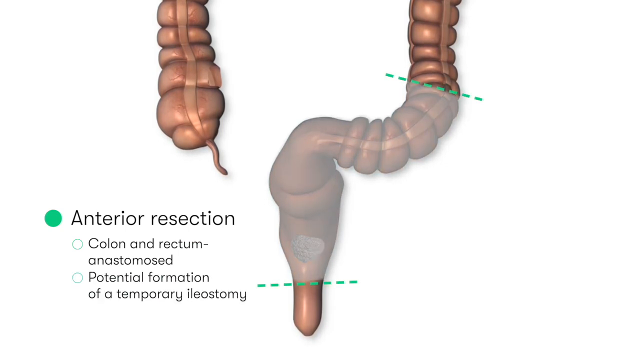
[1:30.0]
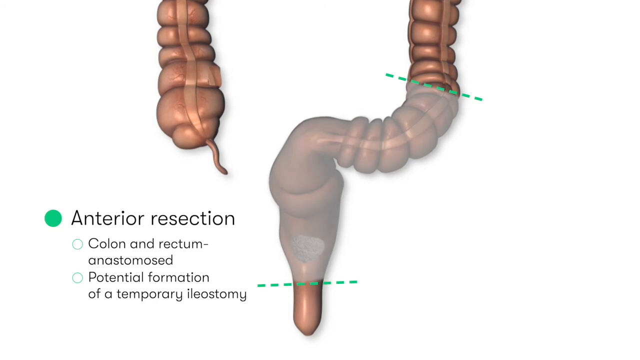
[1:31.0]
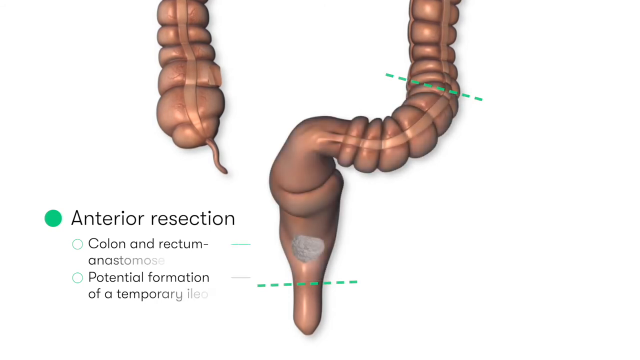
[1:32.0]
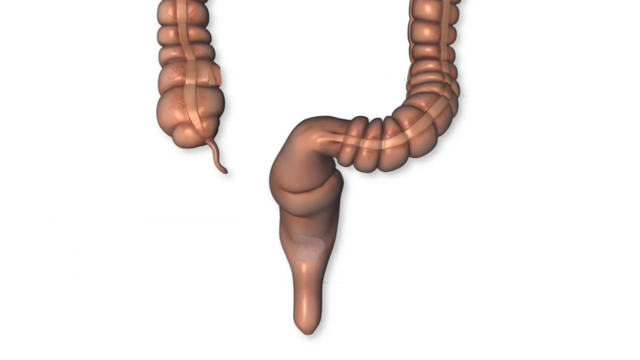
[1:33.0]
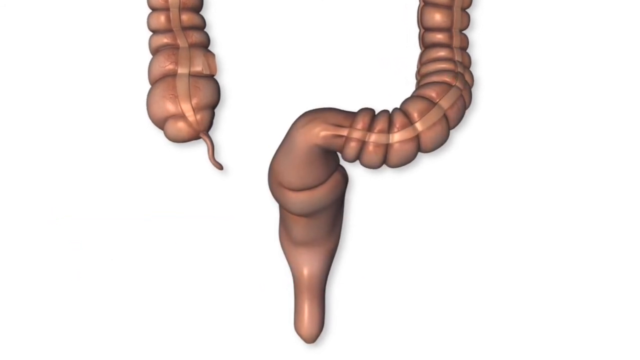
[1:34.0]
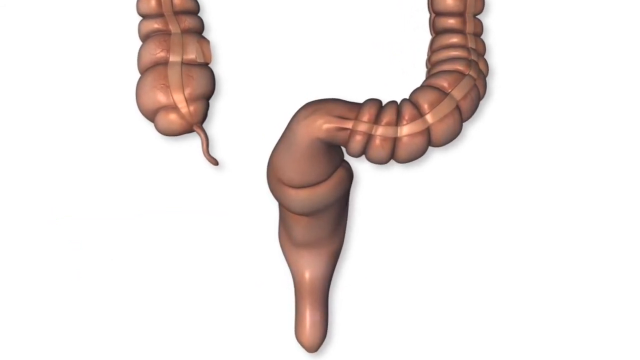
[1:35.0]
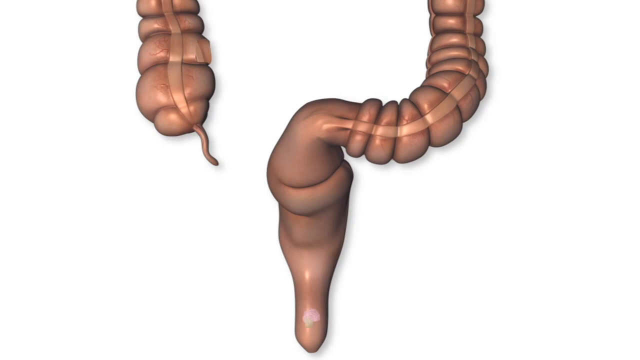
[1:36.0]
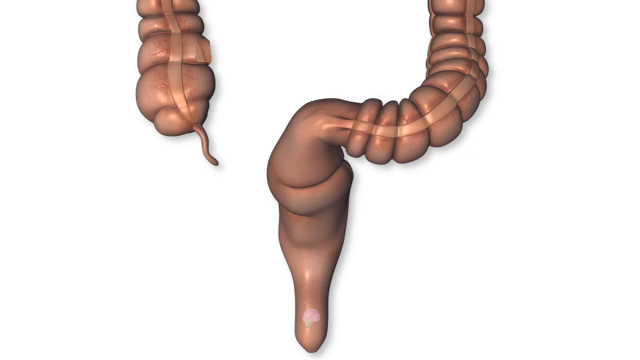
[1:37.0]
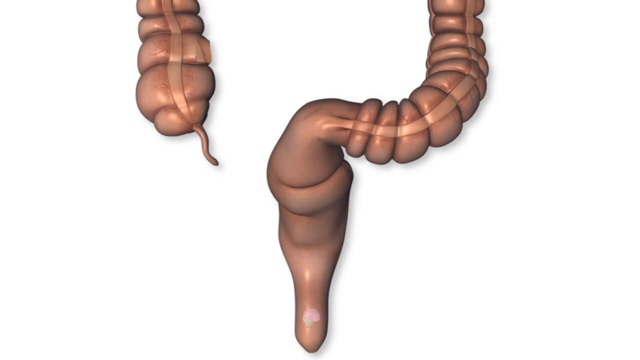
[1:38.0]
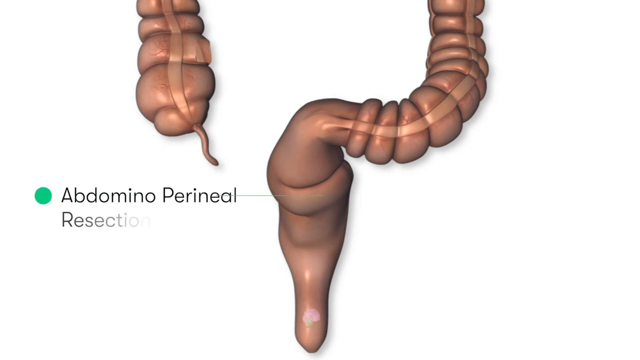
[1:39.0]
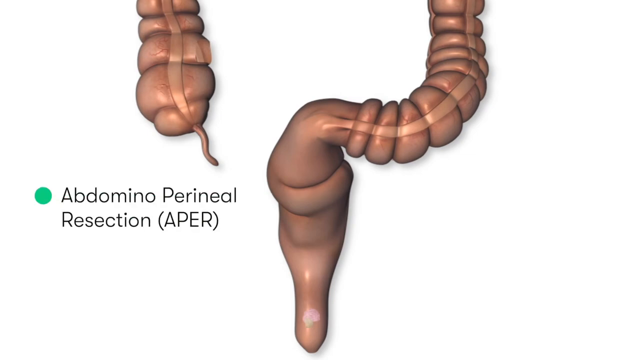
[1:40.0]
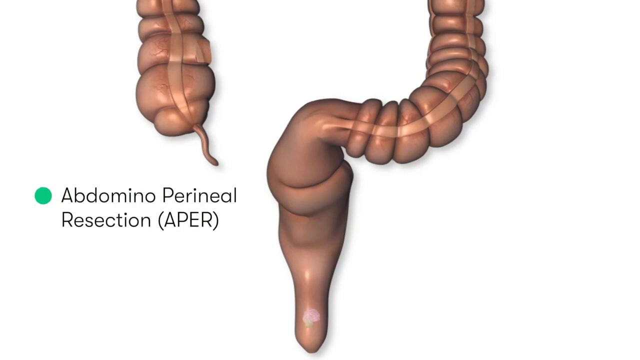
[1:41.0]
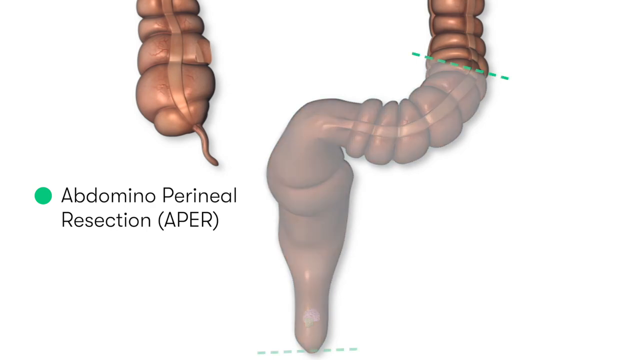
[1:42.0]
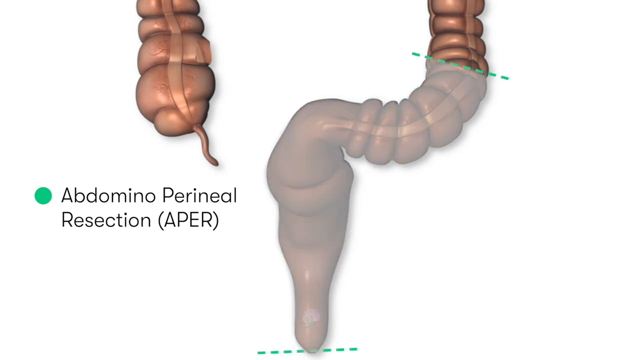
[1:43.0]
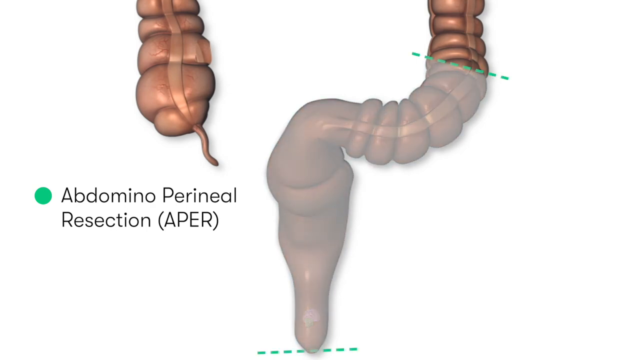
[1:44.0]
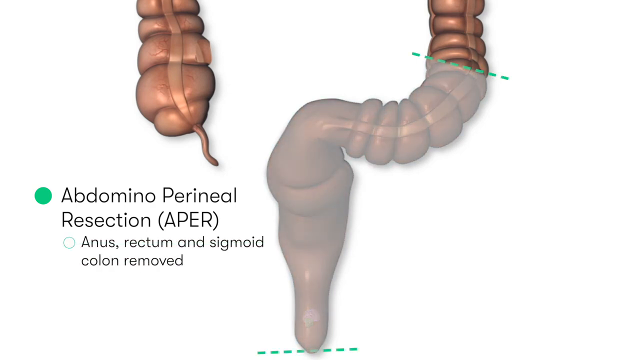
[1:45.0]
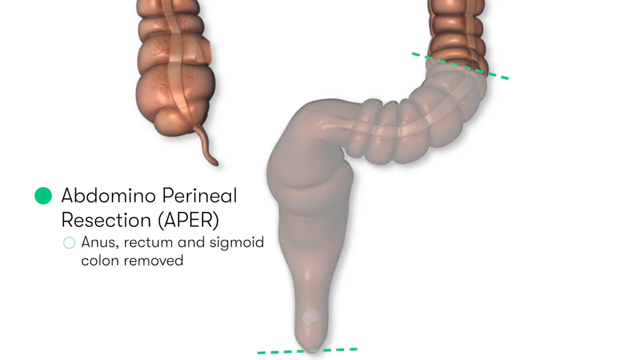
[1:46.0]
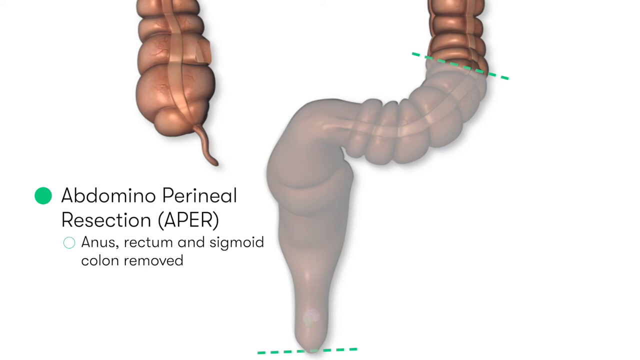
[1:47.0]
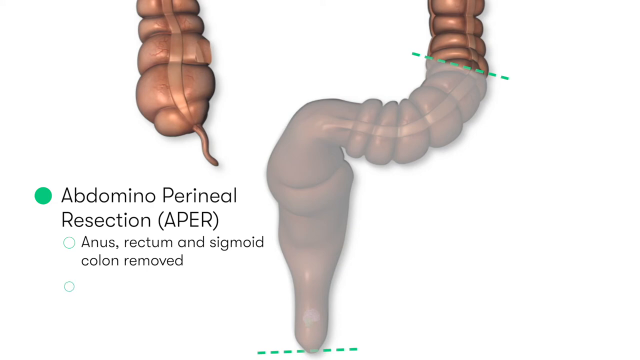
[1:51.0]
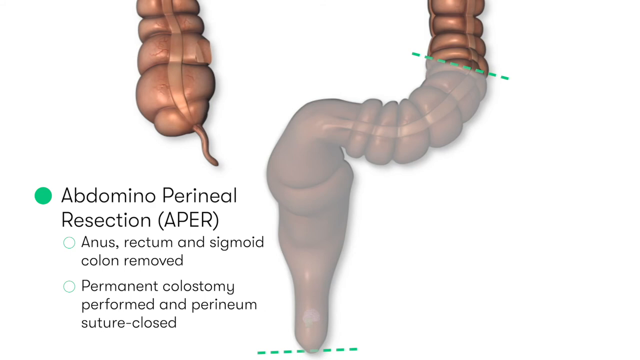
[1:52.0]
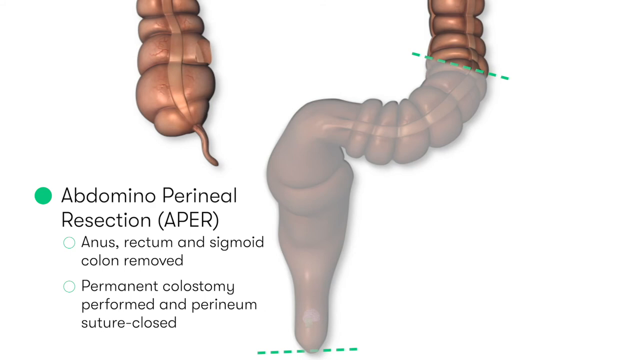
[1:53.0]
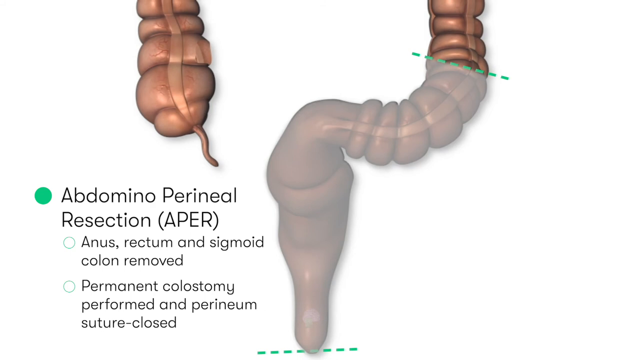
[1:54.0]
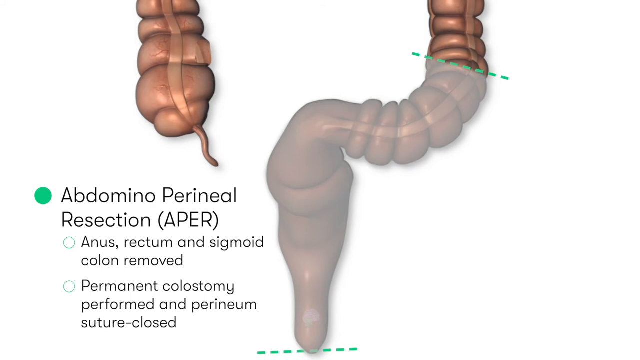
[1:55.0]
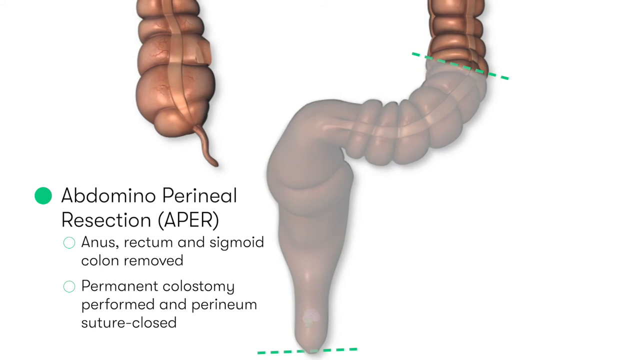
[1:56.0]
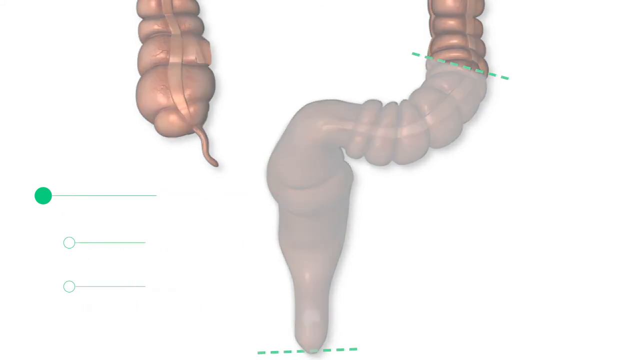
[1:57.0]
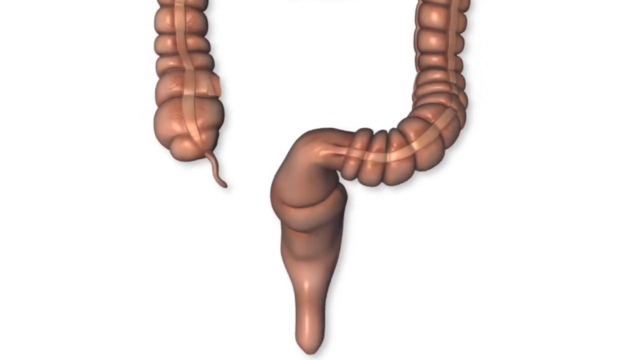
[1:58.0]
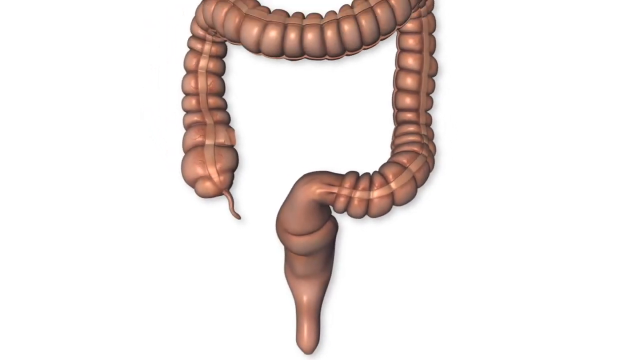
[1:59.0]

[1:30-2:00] A white background is followed by a realistic-looking 3D model of what appears to be intestines or the colon. Kind of green dotted lines mark sections of the body part toward its right side and at the bottom. On the left, a bullet point reads "anterior resection," and below it, "colon and rectum anastomose, potential formation of a temporary ileostomy." The view sort of zooms in on the 3D model a bit, and there is a pause. Then another green bullet point appears on the left side of the screen reading "abdominal perineal resection (APER)." Green dotted lines appear on the section of the 3D body part, and more text appears on the left reading "anus rectum sigmoid colon removed," followed by "permanent colostomy performed" and "perineum suture closed."